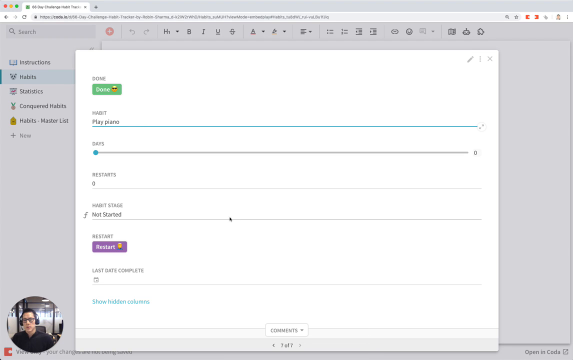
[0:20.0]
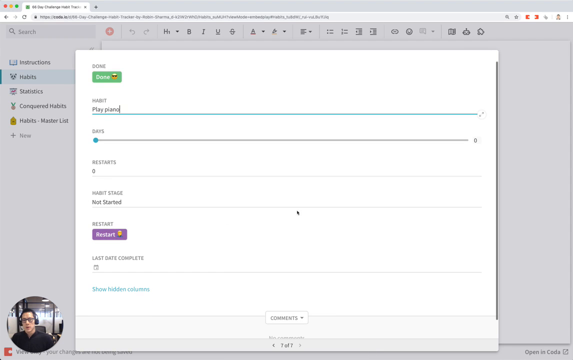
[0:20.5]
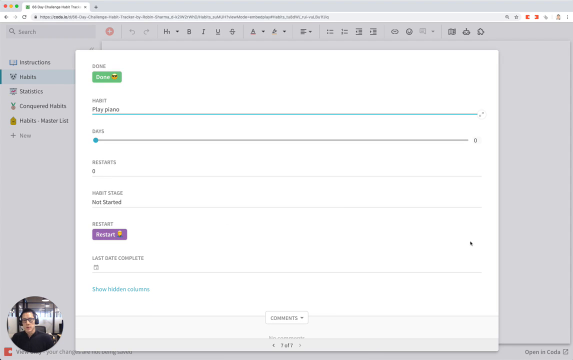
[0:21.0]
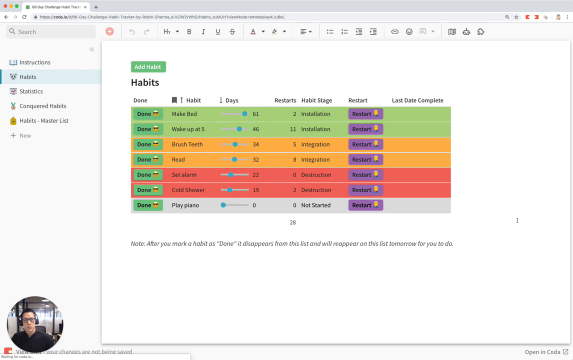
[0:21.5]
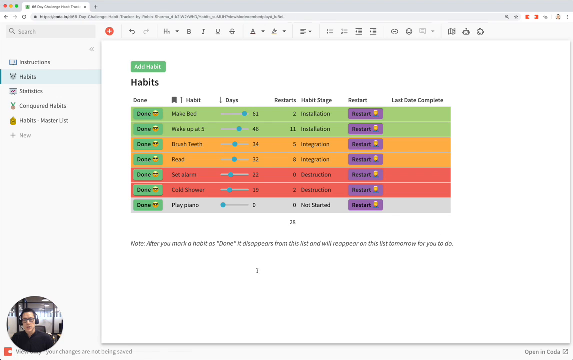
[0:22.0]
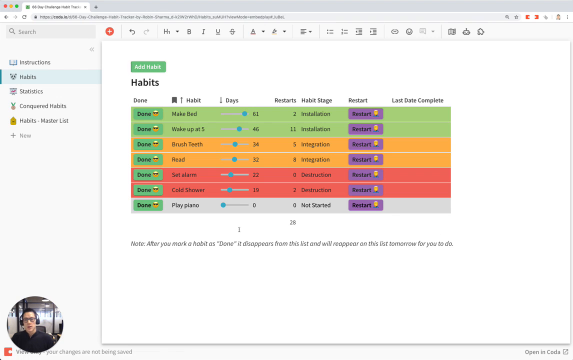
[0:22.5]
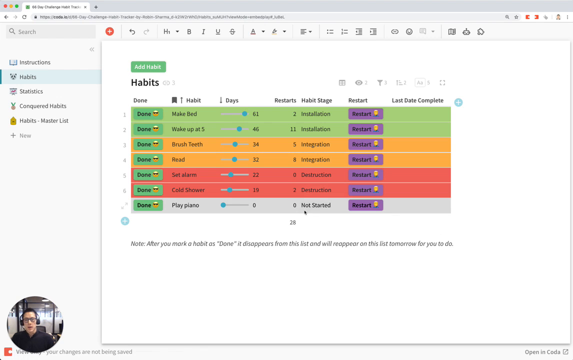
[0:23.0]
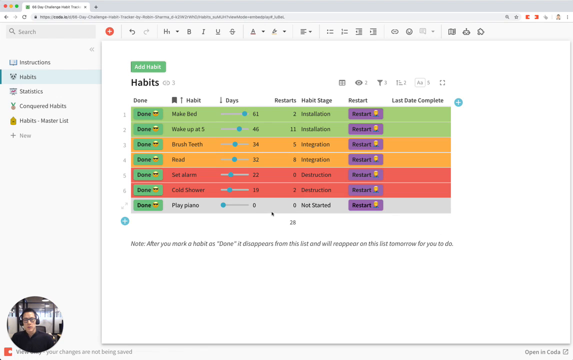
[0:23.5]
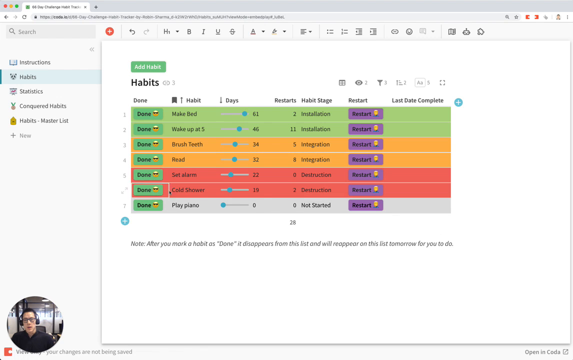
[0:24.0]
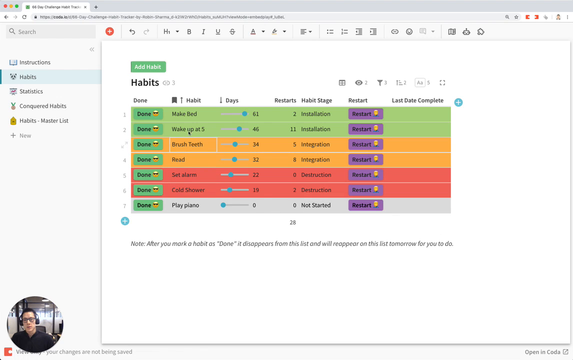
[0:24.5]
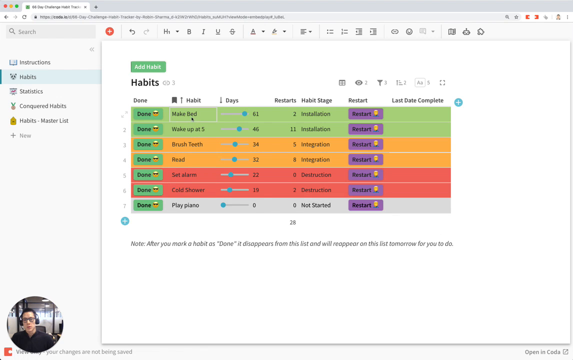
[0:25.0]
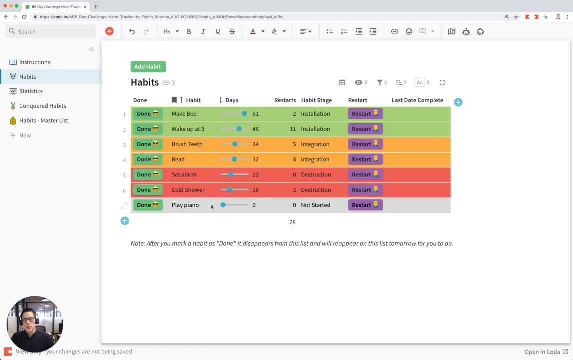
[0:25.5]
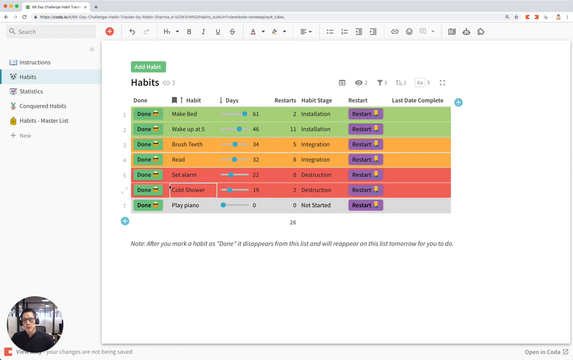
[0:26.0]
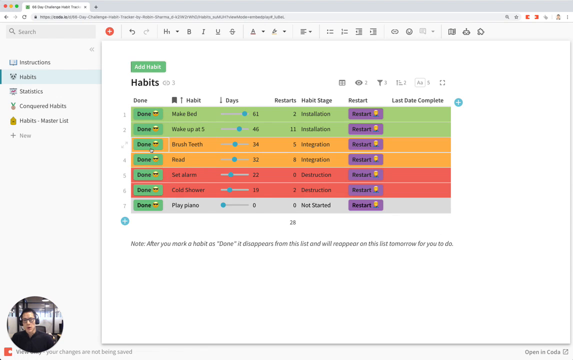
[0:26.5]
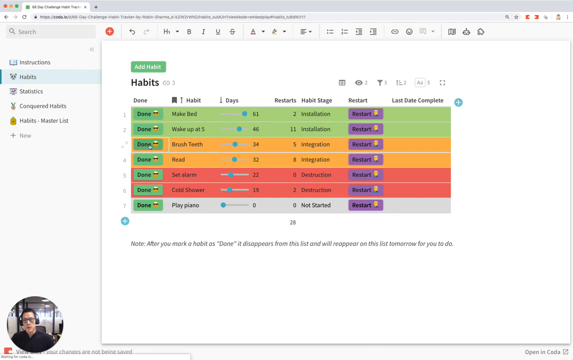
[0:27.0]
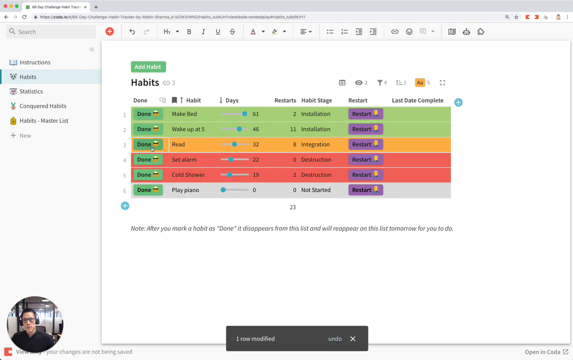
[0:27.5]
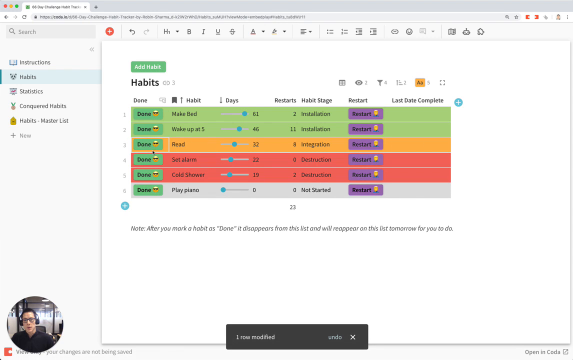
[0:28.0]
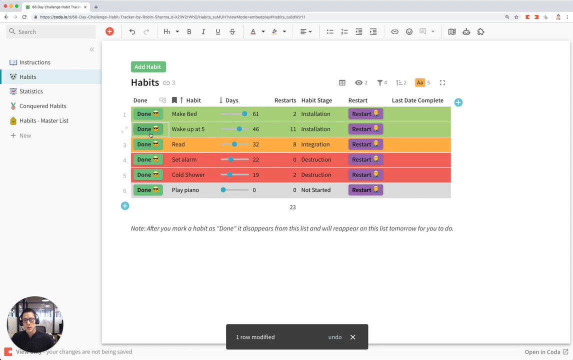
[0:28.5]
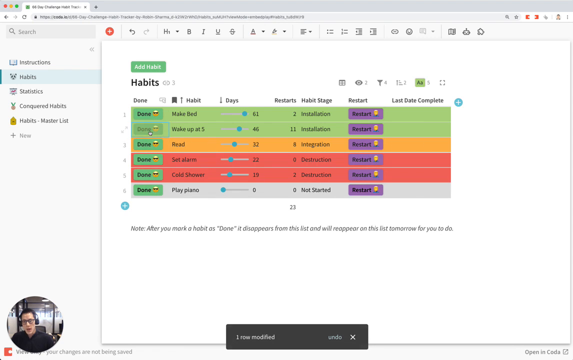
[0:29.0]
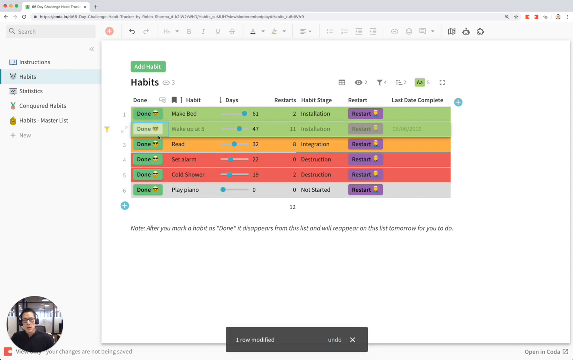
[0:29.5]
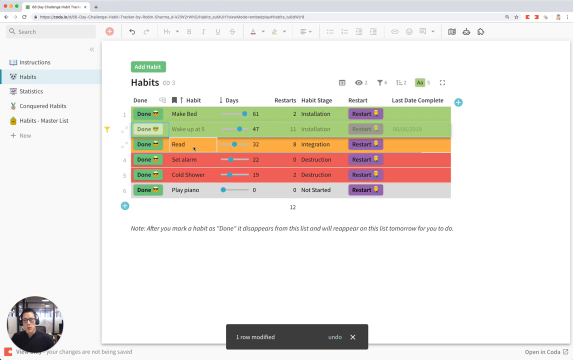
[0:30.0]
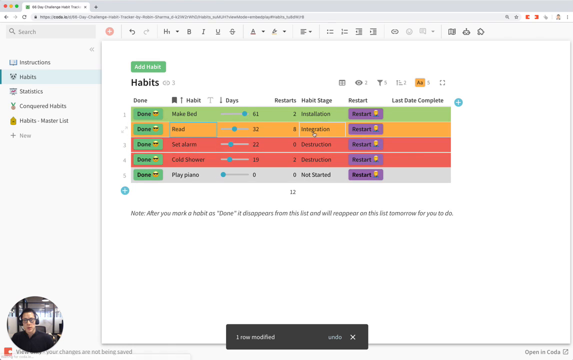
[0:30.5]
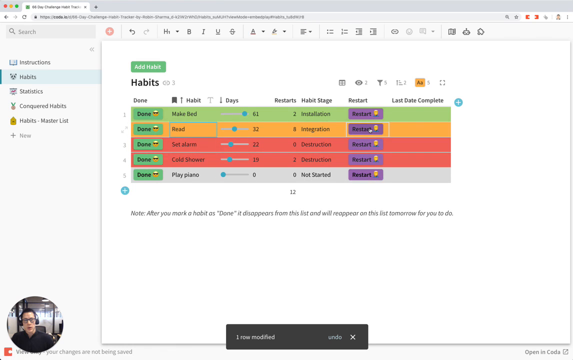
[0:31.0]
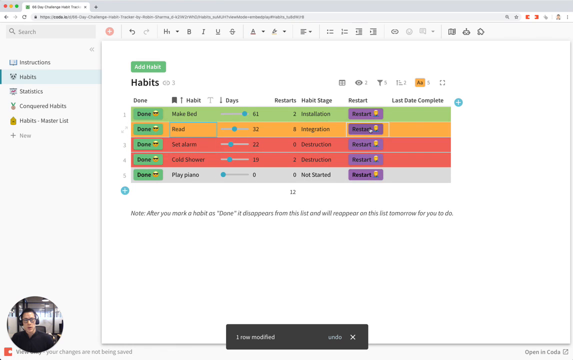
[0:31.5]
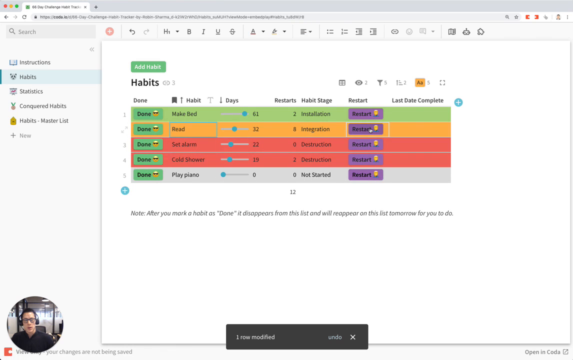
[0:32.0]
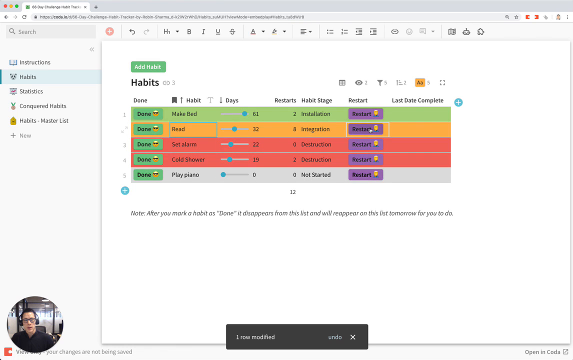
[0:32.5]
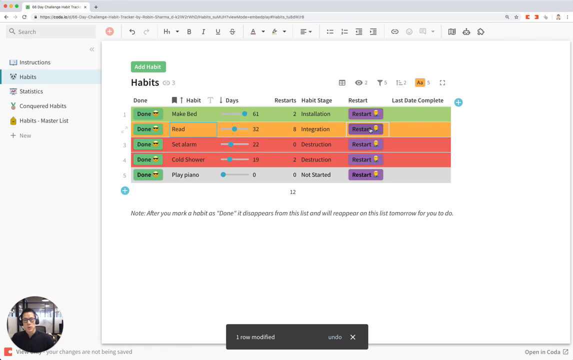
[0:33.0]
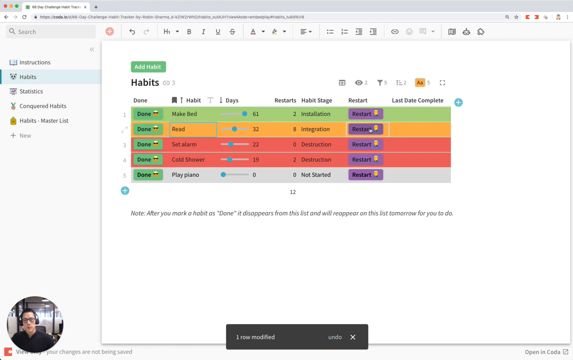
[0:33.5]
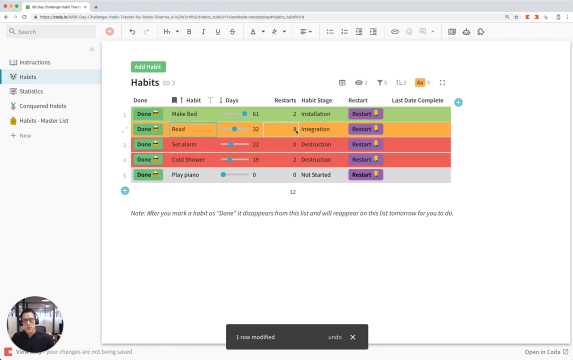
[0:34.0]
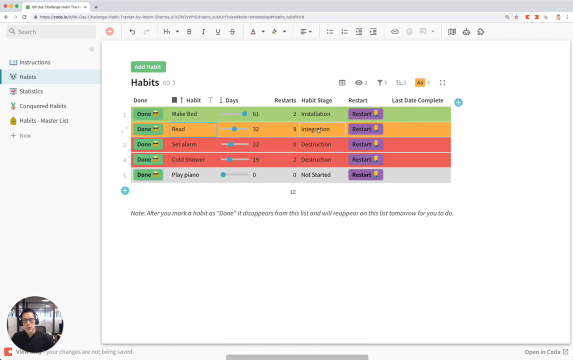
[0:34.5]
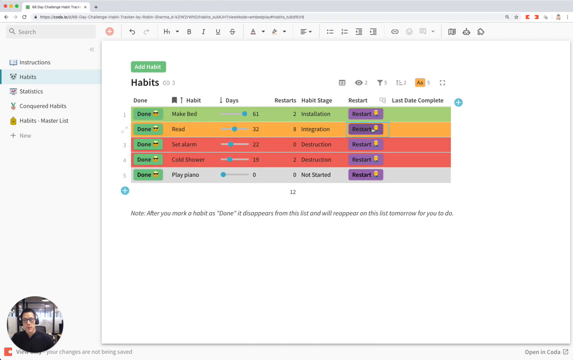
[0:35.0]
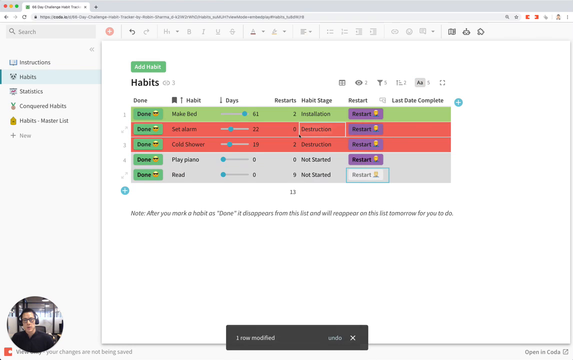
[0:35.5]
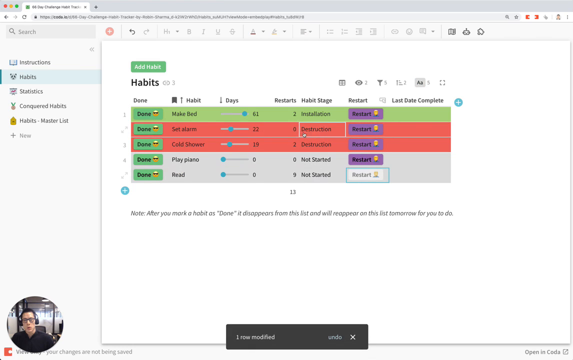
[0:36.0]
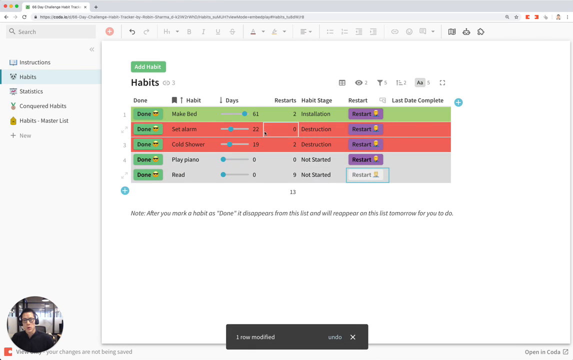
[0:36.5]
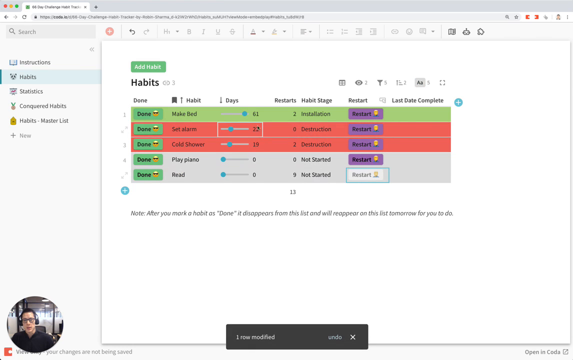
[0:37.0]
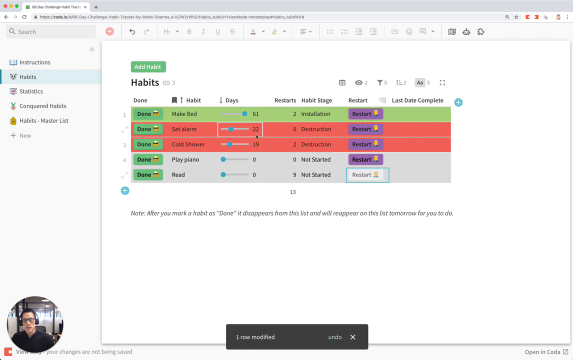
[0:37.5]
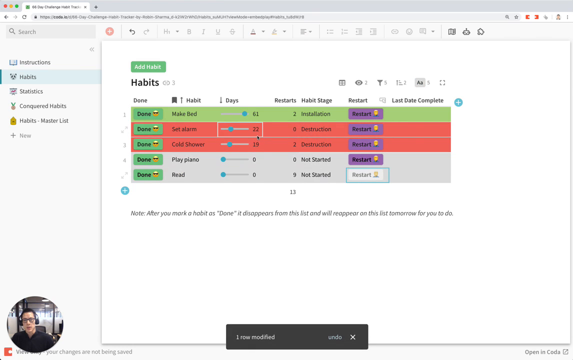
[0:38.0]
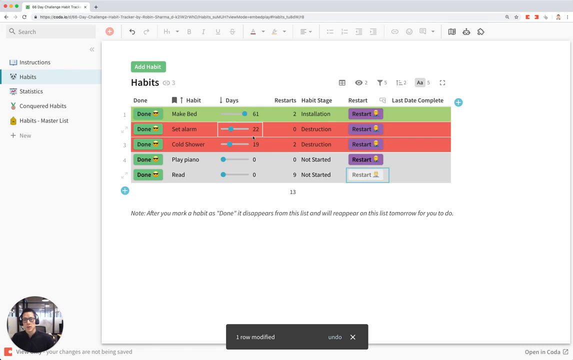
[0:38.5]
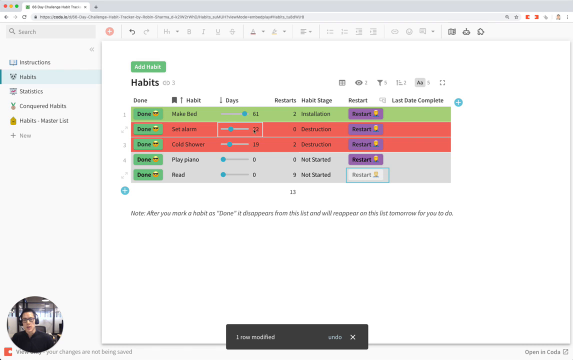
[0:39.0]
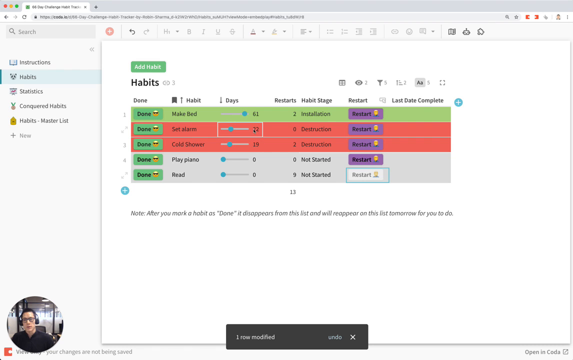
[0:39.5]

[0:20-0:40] The man apparently sets up the play piano habit, which appears in gray at the bottom with "not started" under the habit stage. He then seems to click the done button on multiple habits, and restart on one like read, going through the multicolored habits and demonstrating the functionality of this online tool.